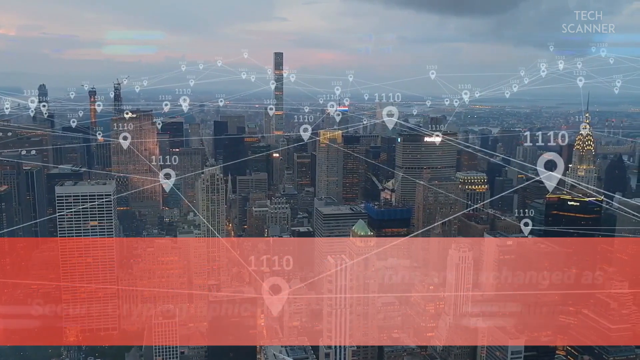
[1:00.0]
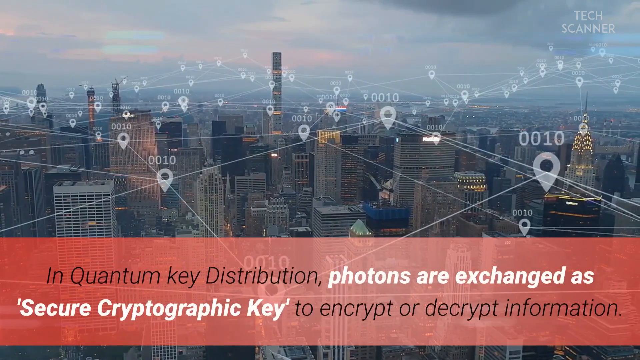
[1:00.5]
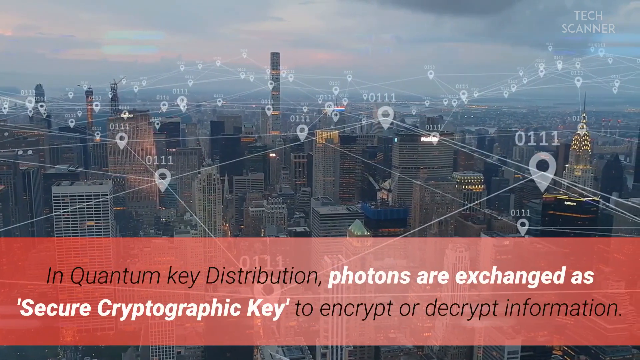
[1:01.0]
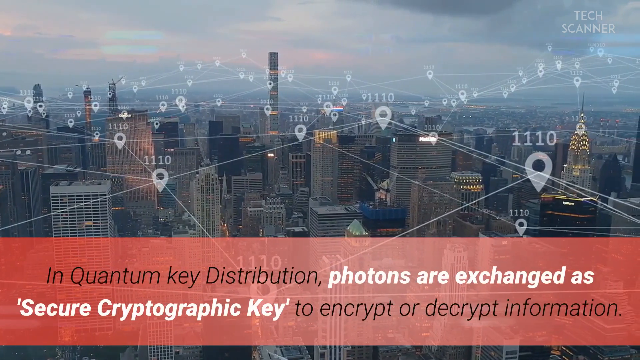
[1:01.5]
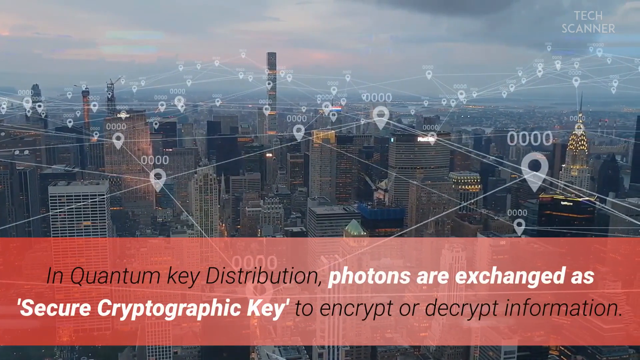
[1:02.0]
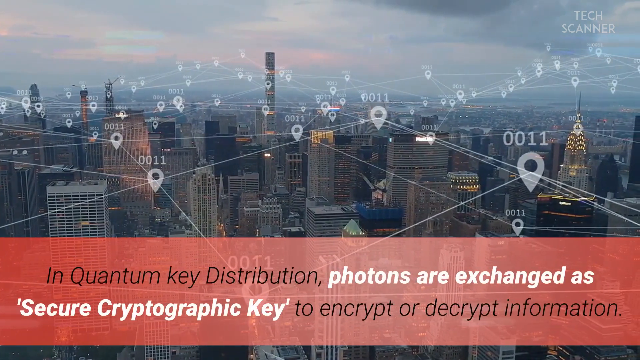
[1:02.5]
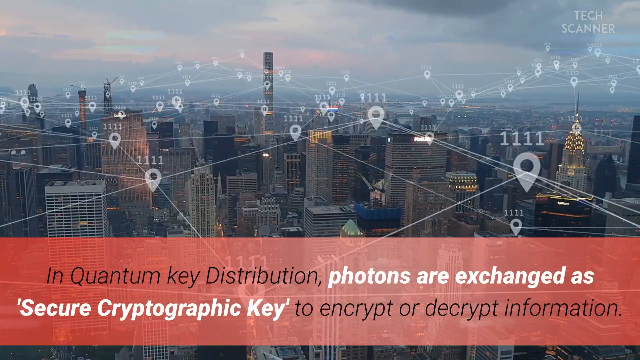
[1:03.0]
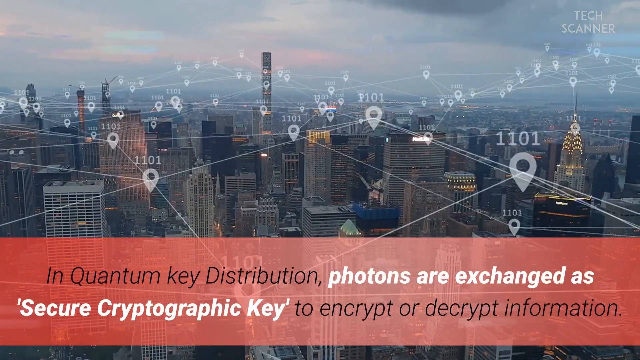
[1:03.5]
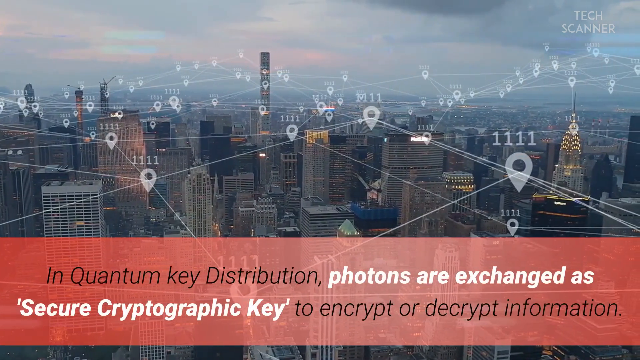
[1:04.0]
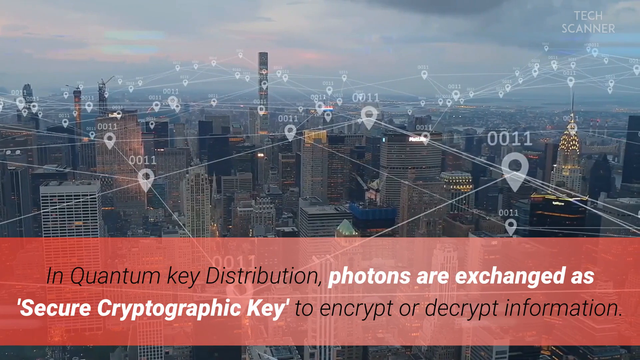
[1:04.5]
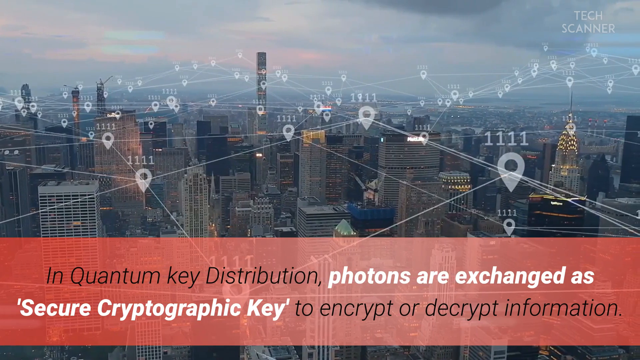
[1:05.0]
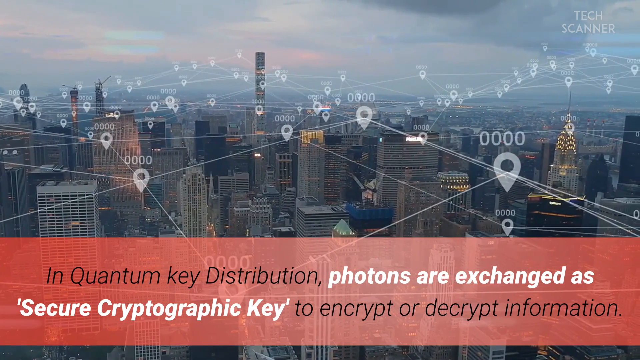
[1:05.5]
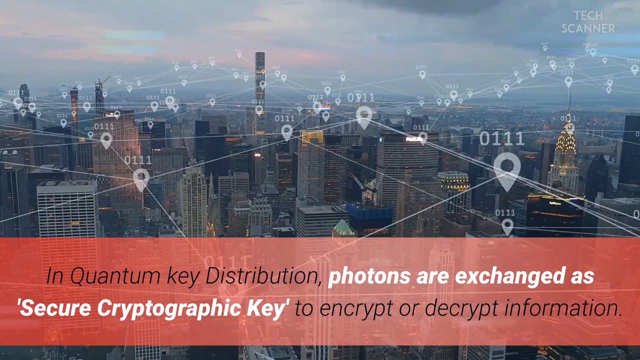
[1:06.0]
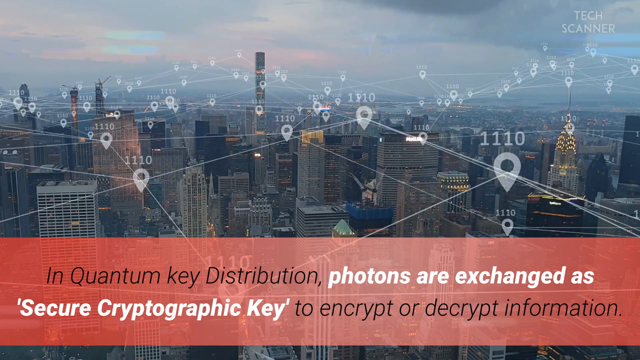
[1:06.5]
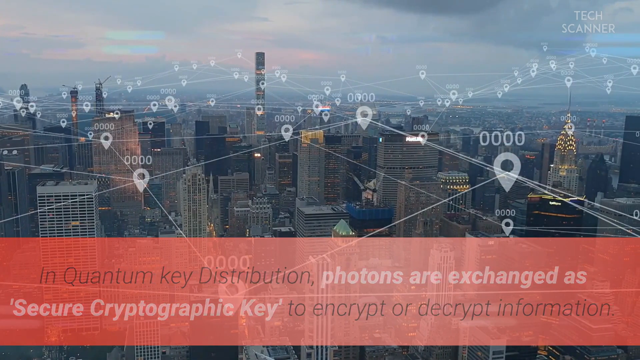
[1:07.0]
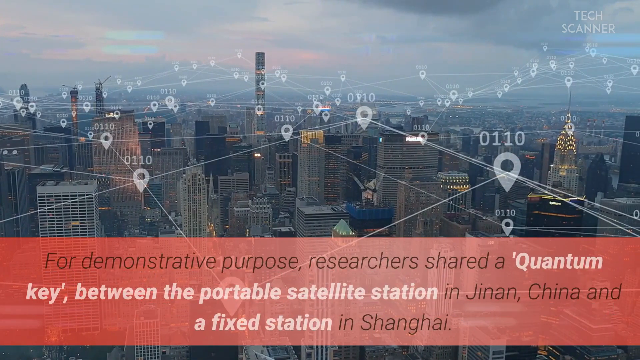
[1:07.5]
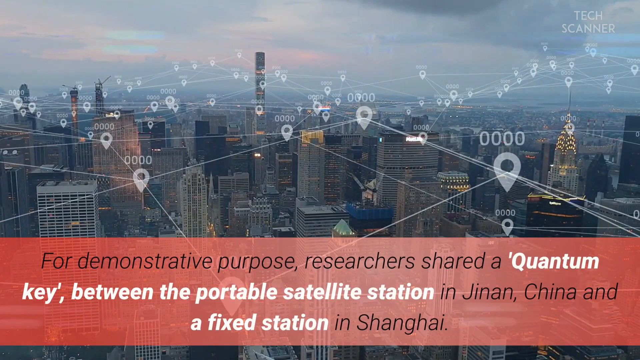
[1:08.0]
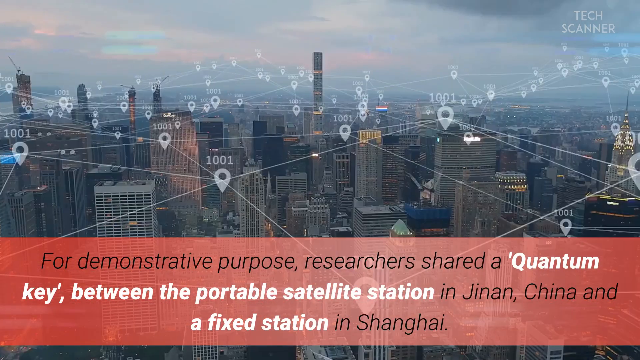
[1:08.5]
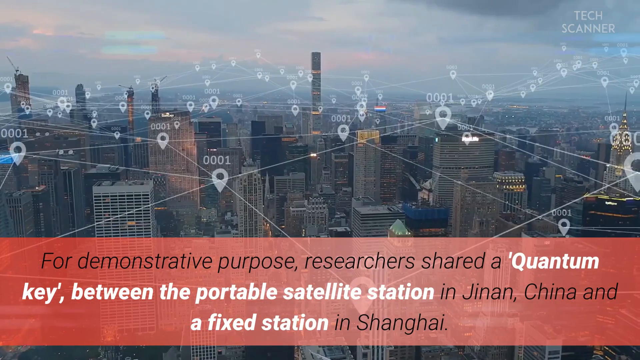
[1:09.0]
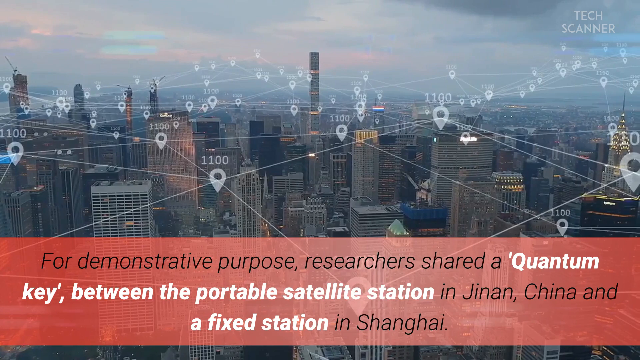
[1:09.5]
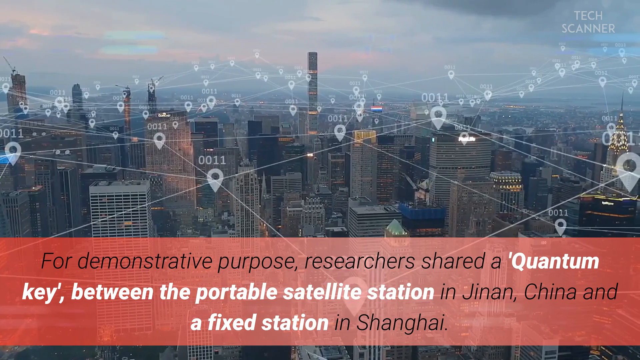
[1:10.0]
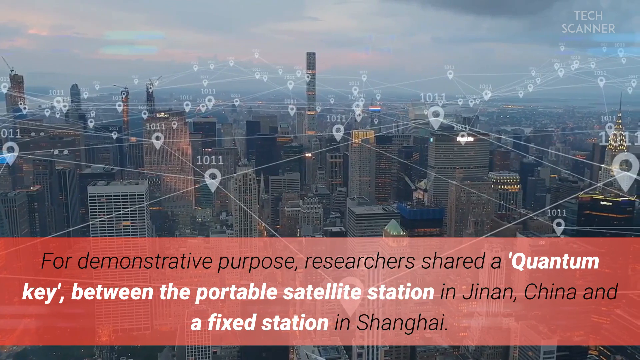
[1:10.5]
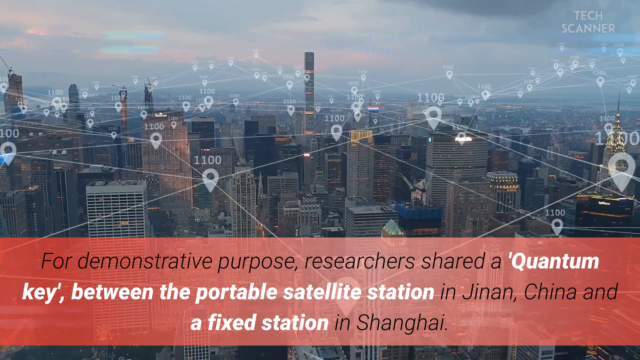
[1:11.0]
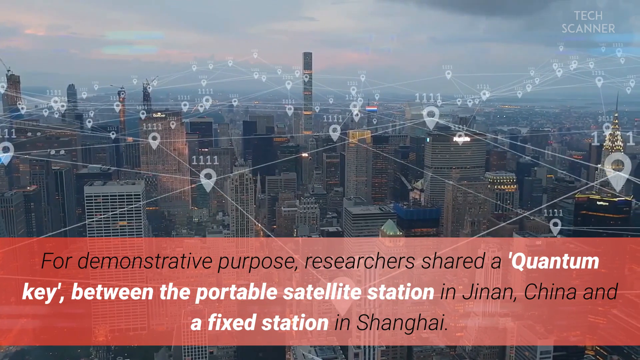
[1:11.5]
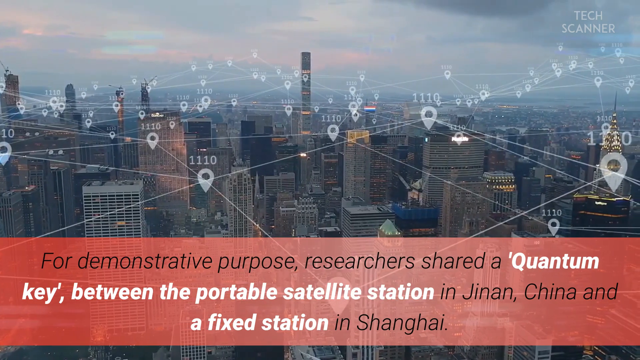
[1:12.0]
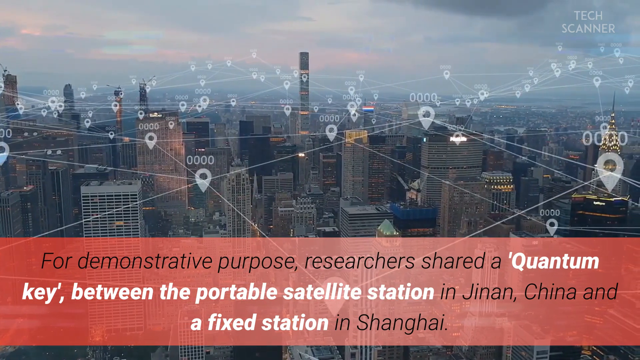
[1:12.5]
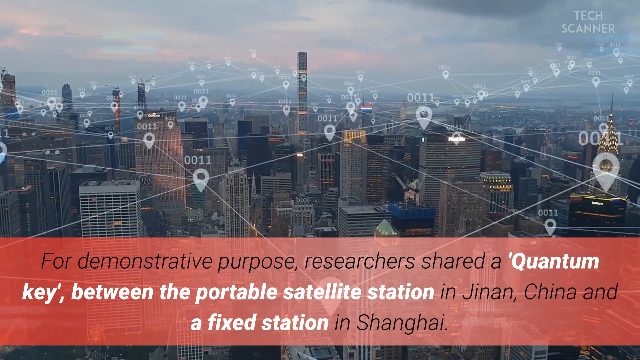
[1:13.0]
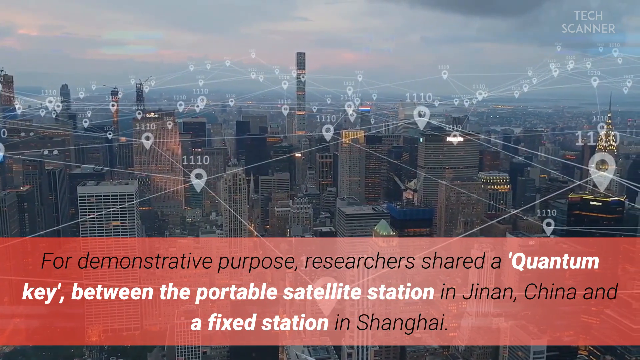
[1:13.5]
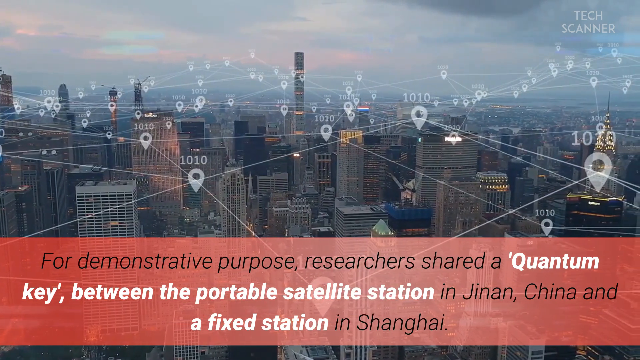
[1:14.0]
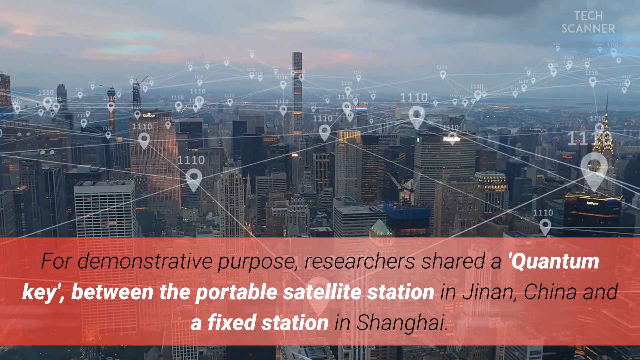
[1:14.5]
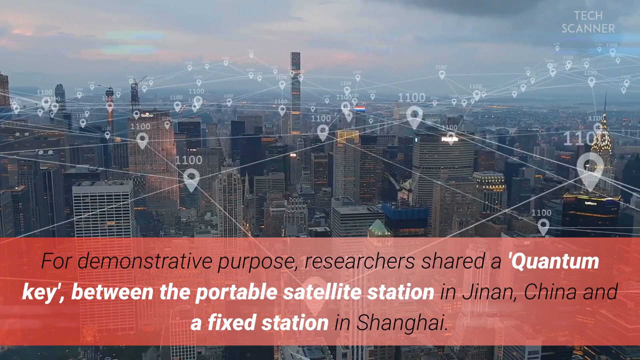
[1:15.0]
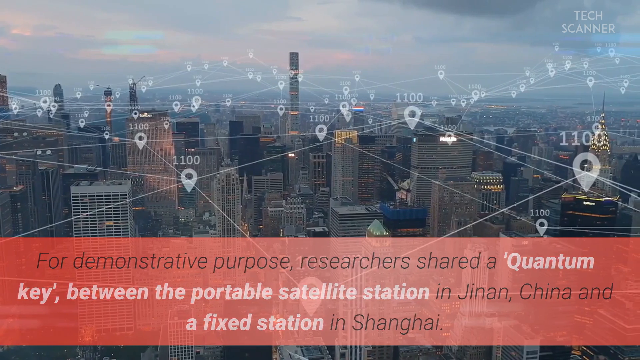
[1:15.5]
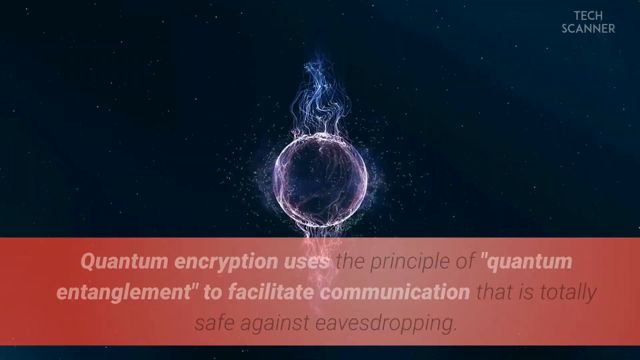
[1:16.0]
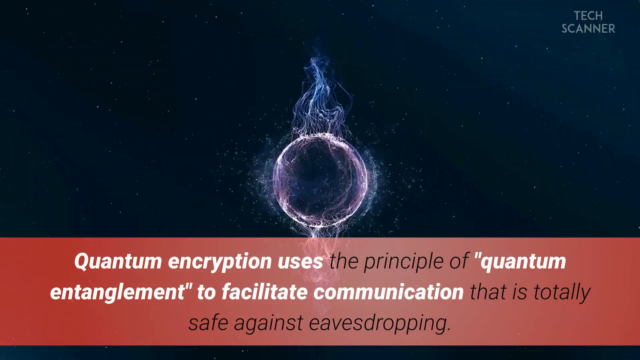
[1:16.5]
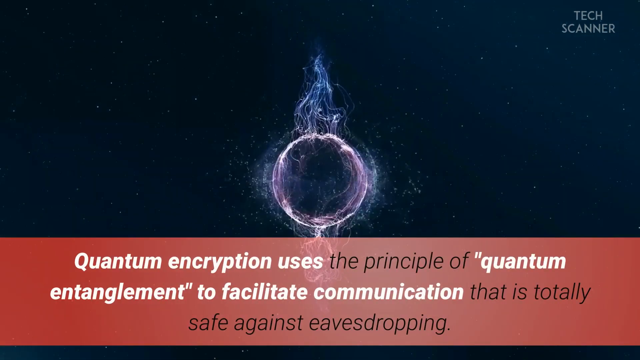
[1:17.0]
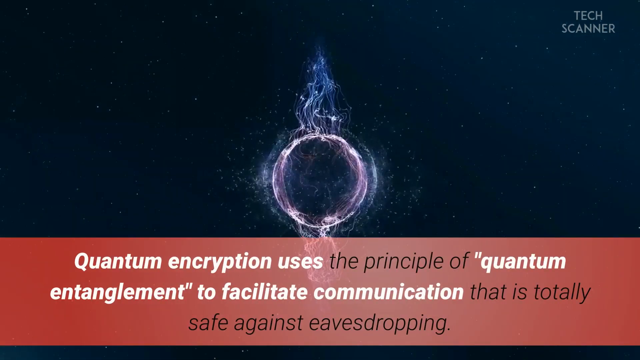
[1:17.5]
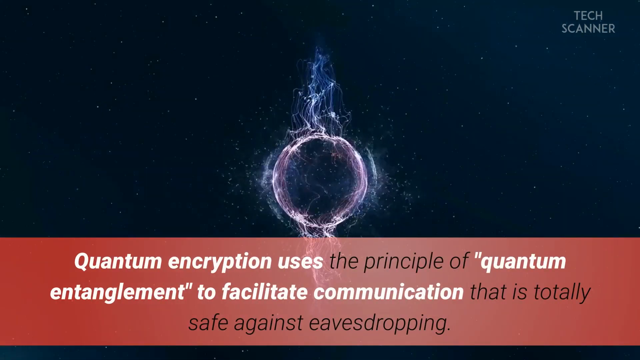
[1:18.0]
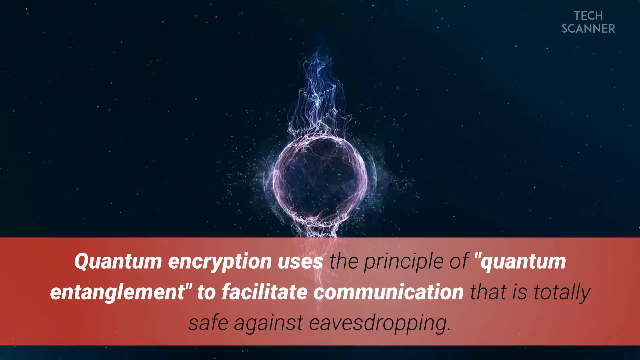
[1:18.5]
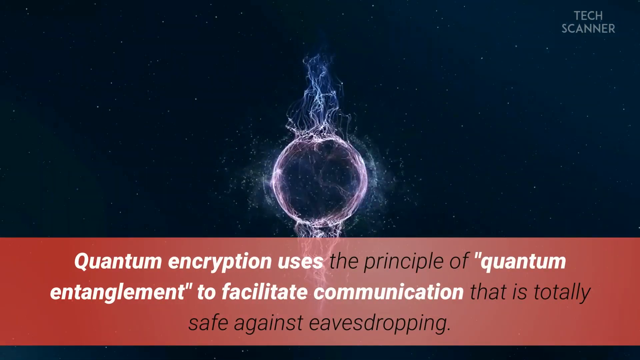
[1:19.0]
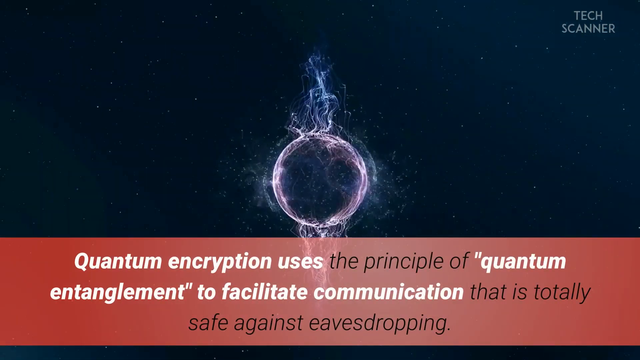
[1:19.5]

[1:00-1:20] The red box at the bottom reads "in quantum key distribution photons are exchanged as secure cryptographic key to encrypt or decrypt information," with "secure cryptographic key" in single quotation marks. Over the cityscape, some of the ones in the markers change to zeros, all in binary code of ones and zeros. The scene then changes to a background with a red or somewhat purplish ball in the center, made up of electronics. Beneath the ball, the red box carries text saying that quantum encryption uses the principles of quantum entanglement "to facilitate communication that is totally safe against eavesdropping."